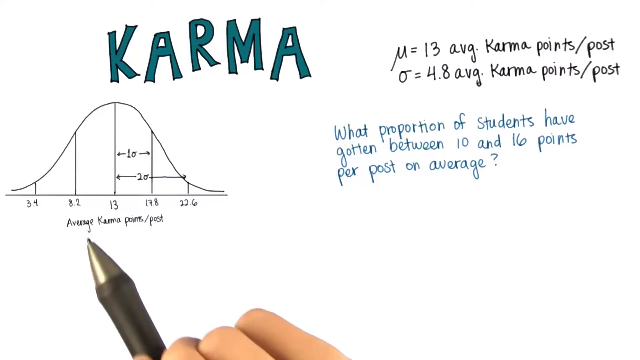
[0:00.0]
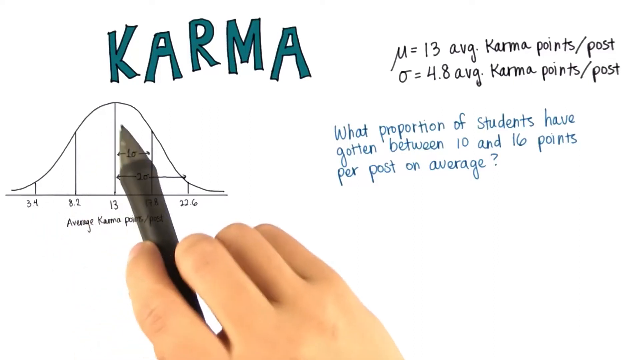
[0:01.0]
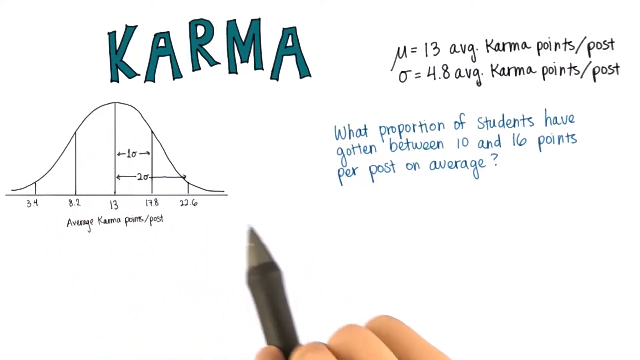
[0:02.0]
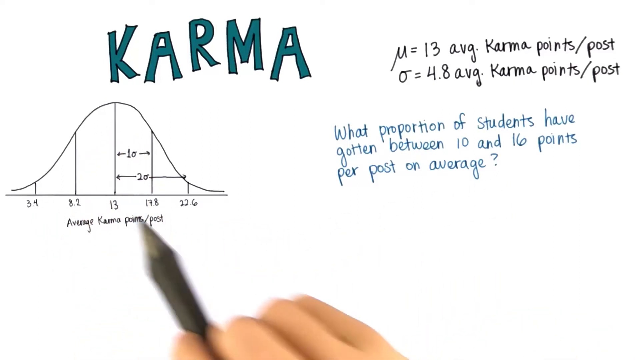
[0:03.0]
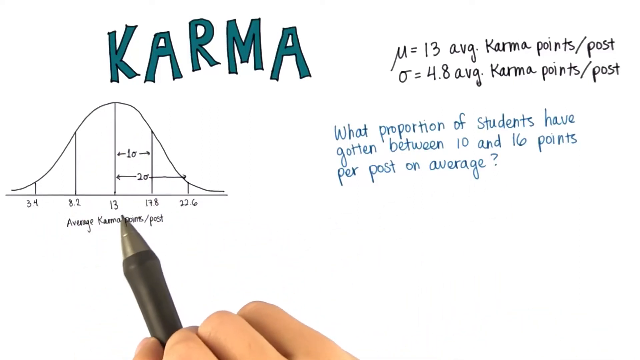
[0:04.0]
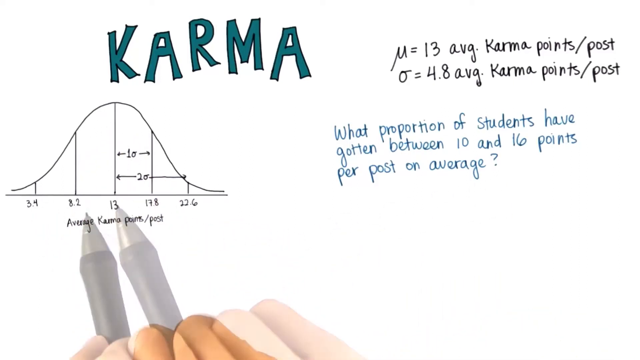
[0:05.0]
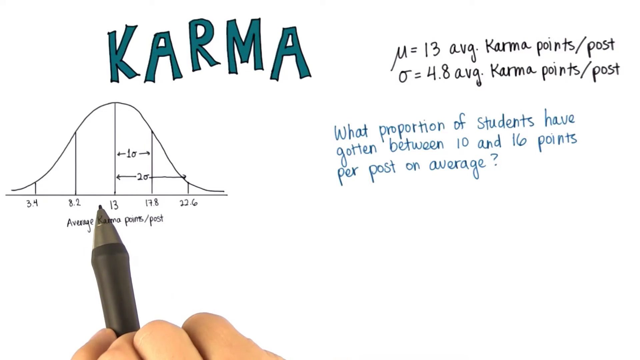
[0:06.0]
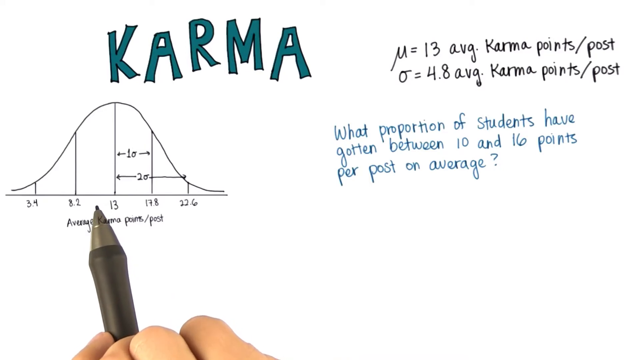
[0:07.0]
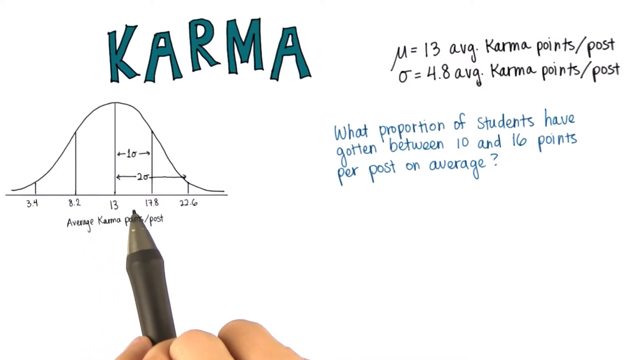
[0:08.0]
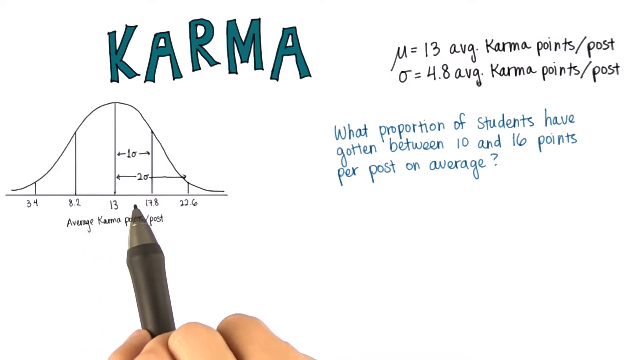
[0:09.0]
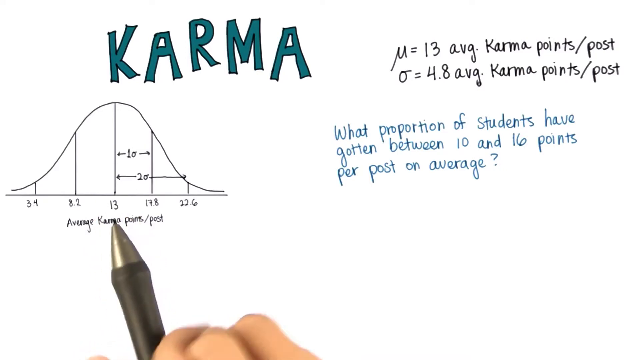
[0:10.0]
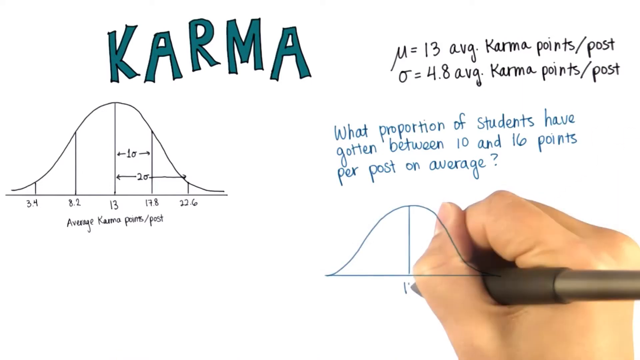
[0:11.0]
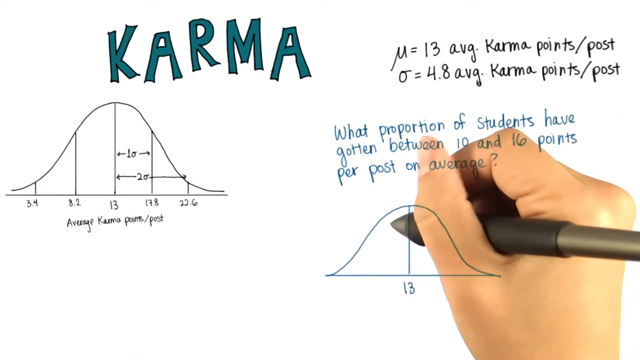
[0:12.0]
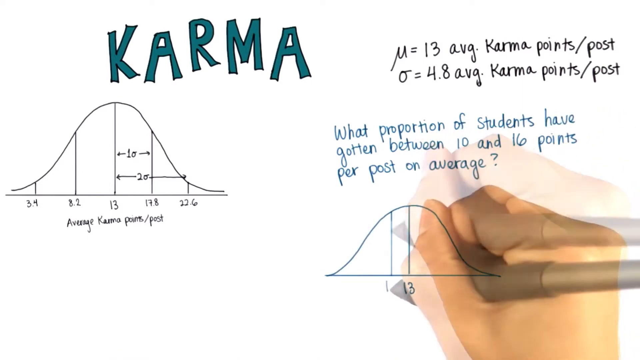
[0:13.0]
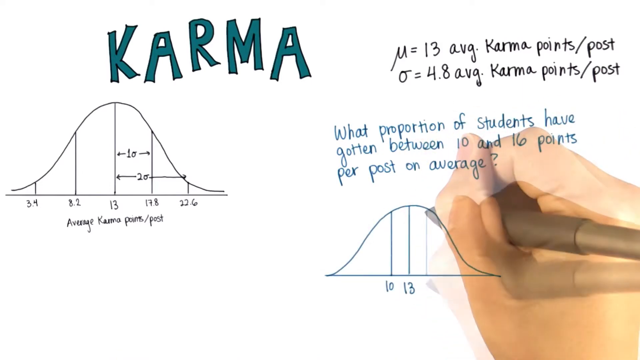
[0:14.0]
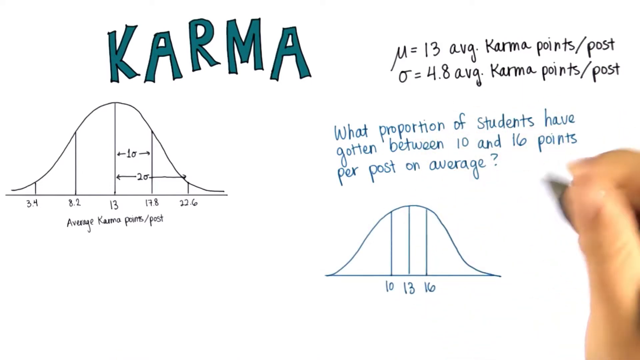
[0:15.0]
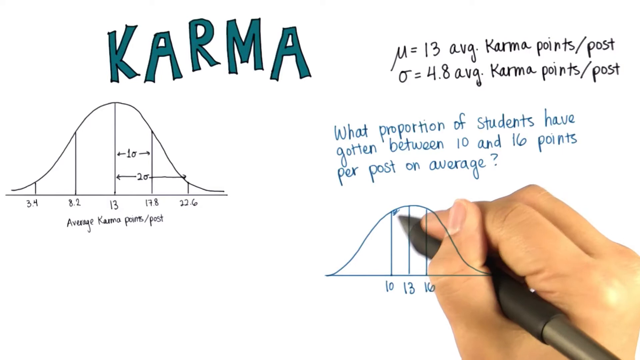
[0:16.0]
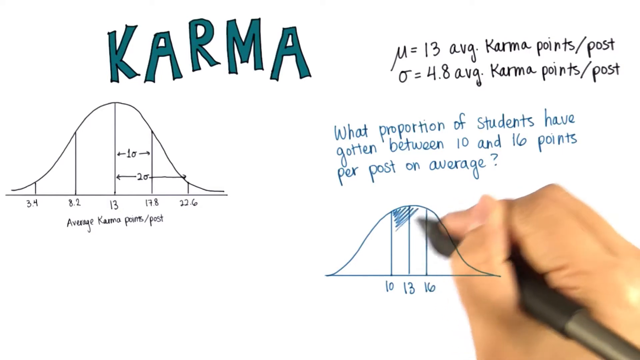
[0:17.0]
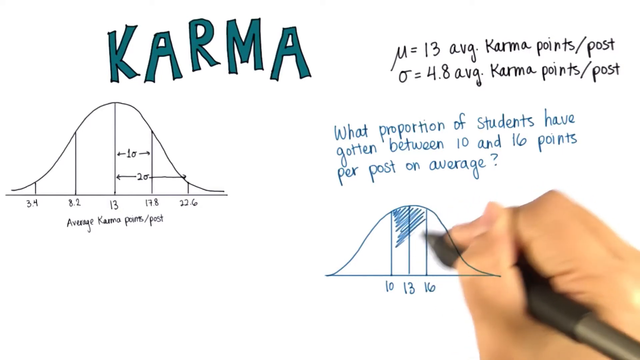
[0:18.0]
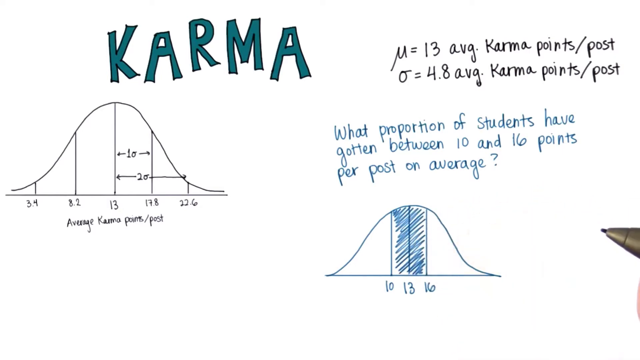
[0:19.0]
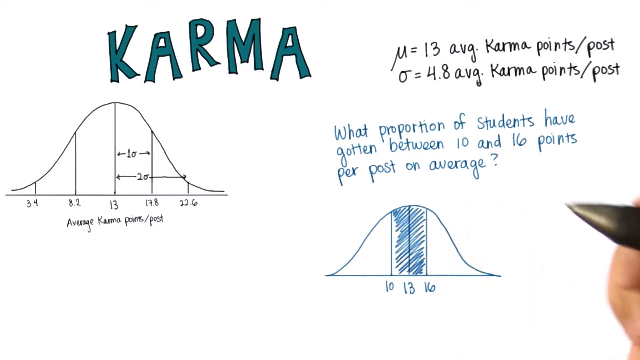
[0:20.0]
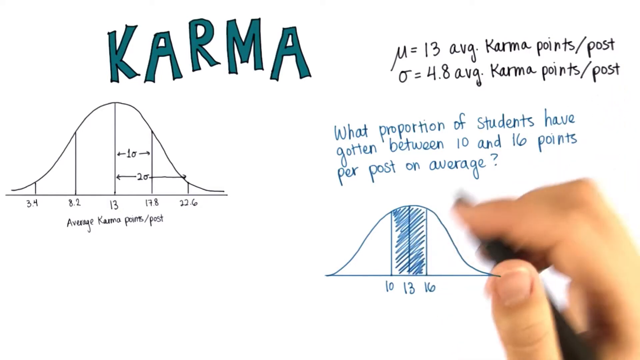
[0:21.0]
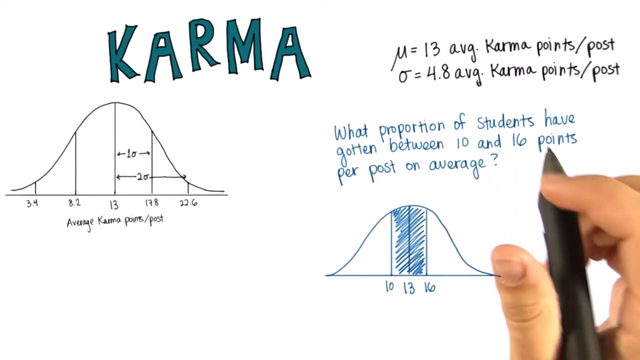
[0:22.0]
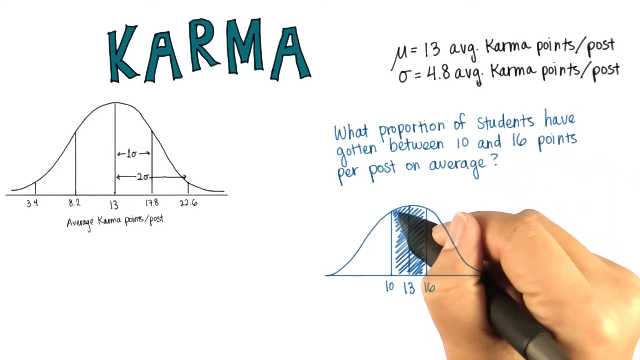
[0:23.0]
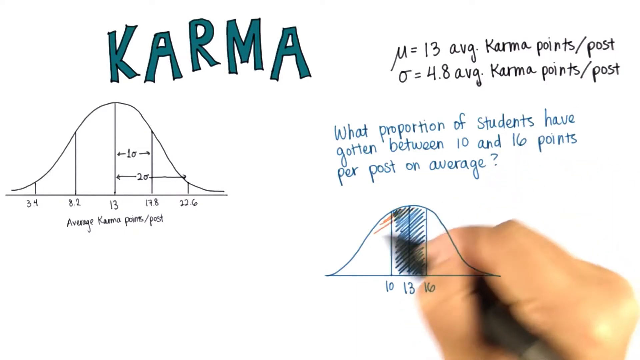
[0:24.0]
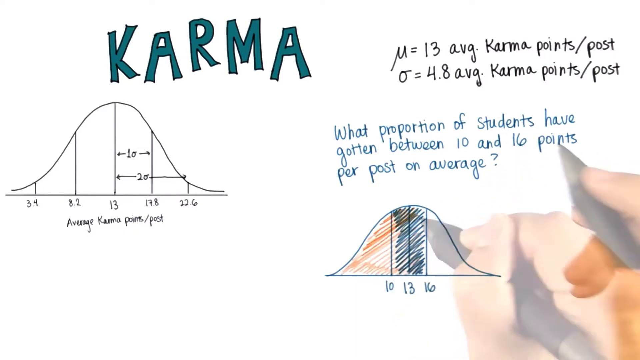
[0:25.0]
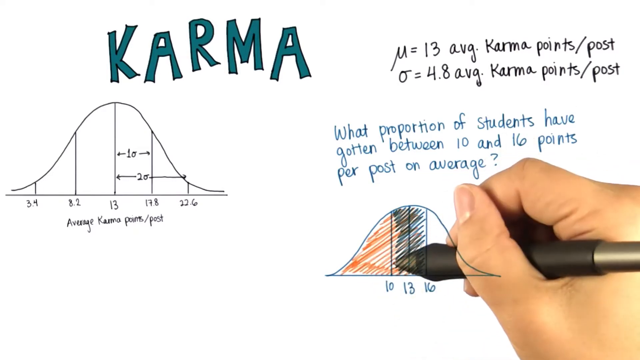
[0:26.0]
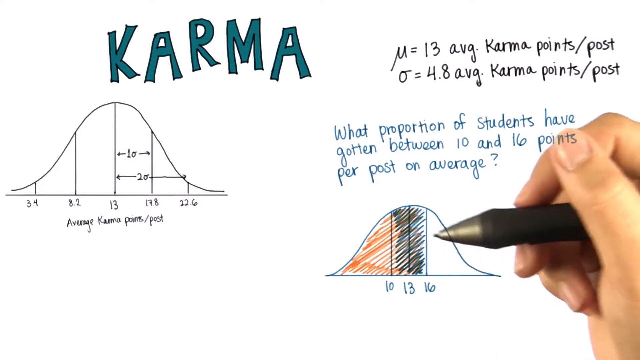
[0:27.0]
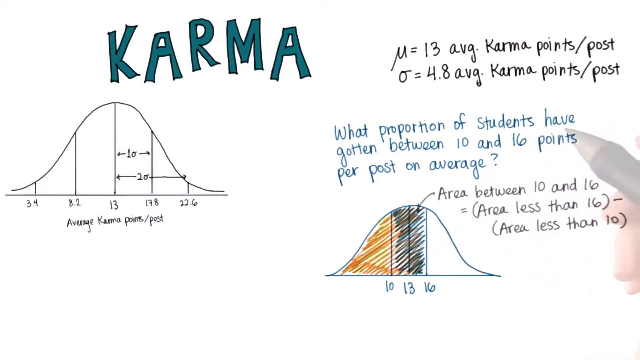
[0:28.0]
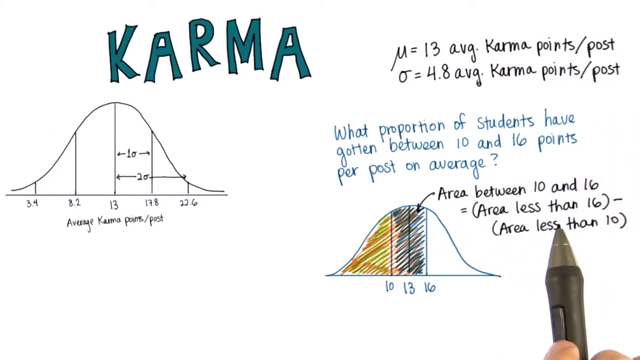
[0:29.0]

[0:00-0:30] A solid white background appears with the word "karma" across the top in large, bold, blocky green letters. Equations to the side of it read "m equals 13 average karma points / post" and "o equals 4.3 average karma points per post". Underneath, handwriting reads "what proportion of students have gotten between 10 and 16 points per post on average". The author's hand is in view at the very bottom of the screen, using an ink pen as a pointer to point at "average karma points post", a little graph underneath the main word karma on the left side of the screen. The graph rises from nothing up like a hill and back down to nothing across zero to 22 and a half points. The author rapidly moves the pen around the screen, pointing from one number to another. He draws a few lines in another diagram on the right-hand side and starts to color it in, marking the area between 10 and 16.